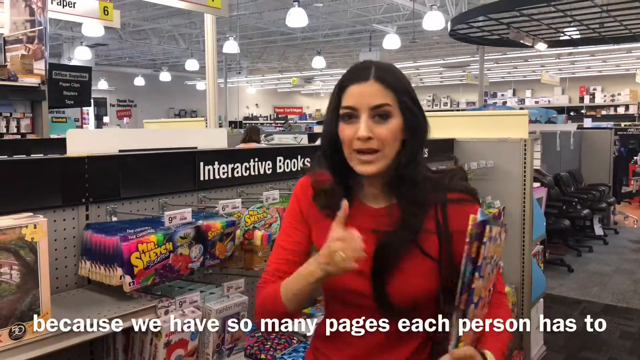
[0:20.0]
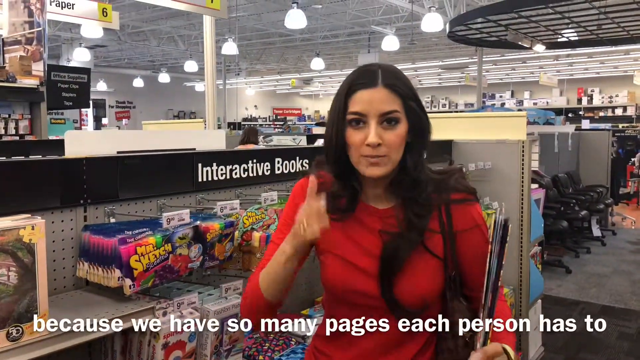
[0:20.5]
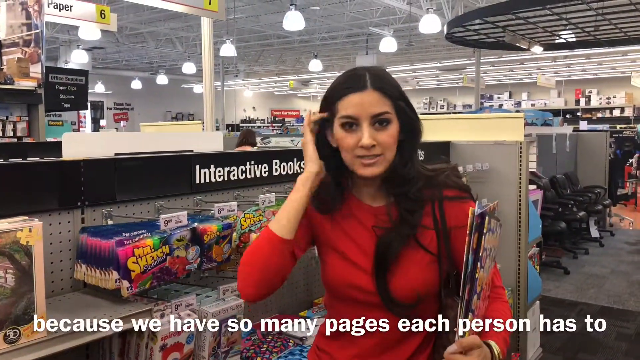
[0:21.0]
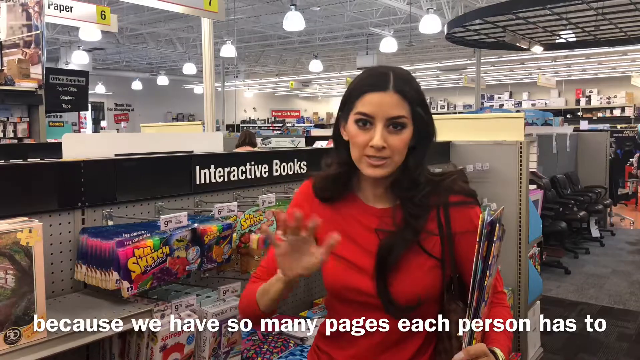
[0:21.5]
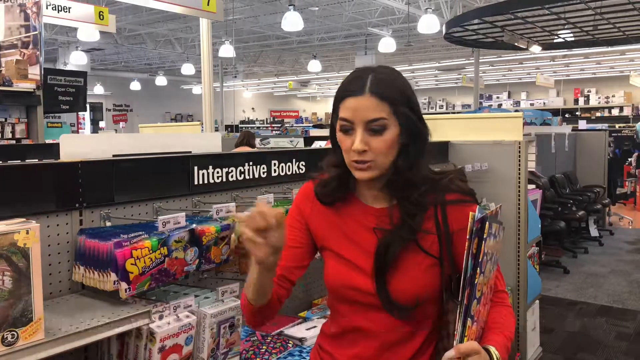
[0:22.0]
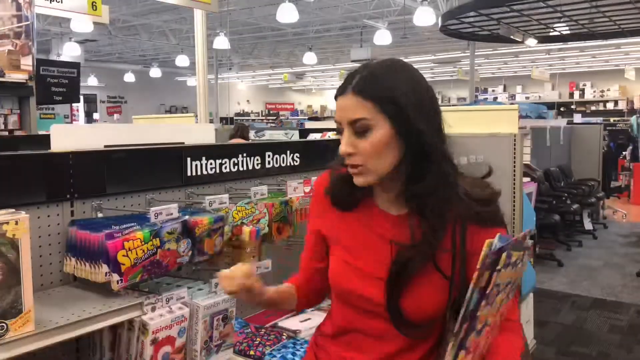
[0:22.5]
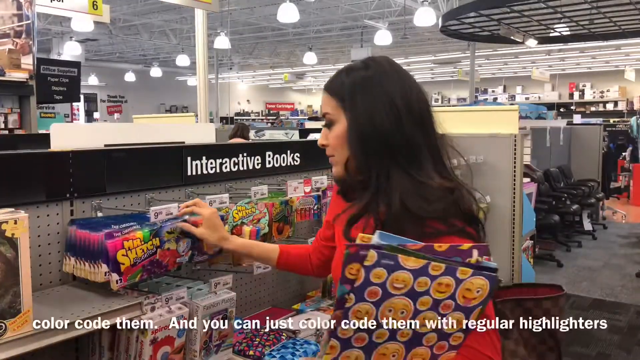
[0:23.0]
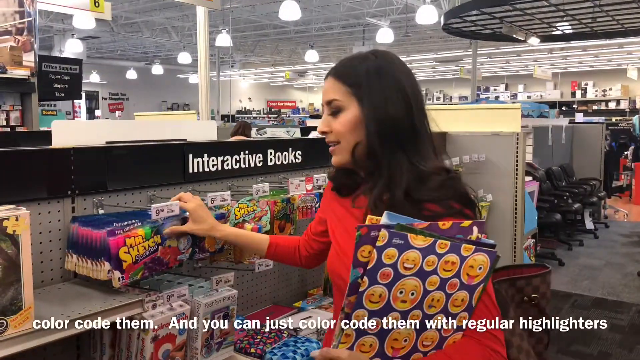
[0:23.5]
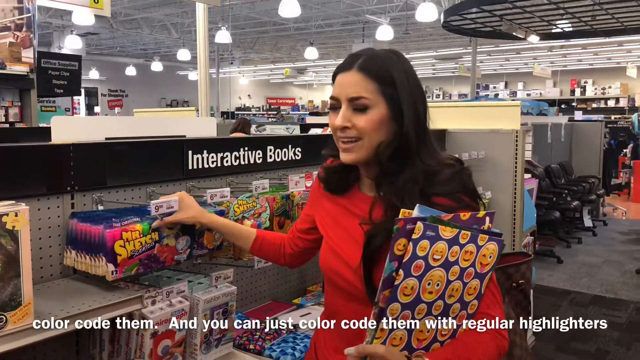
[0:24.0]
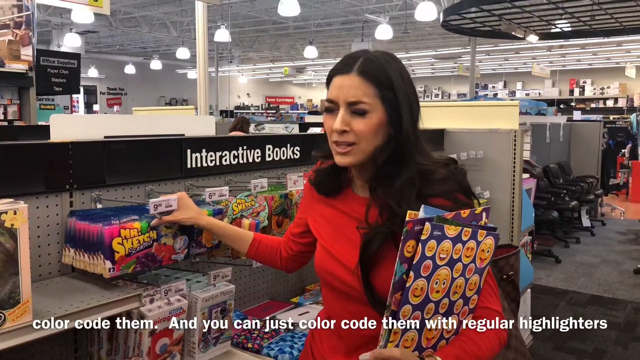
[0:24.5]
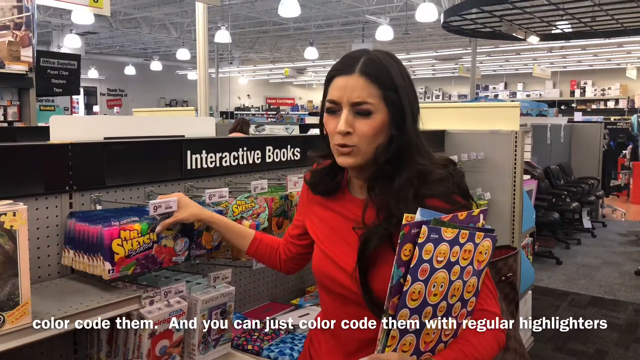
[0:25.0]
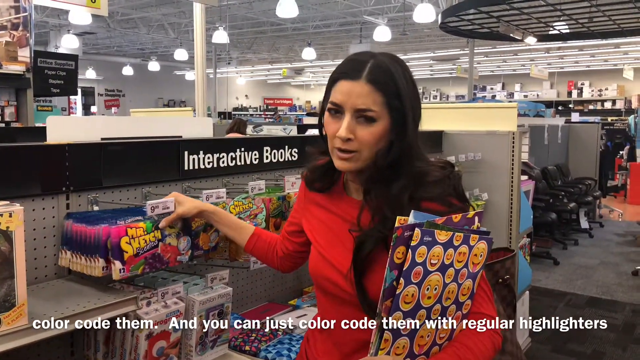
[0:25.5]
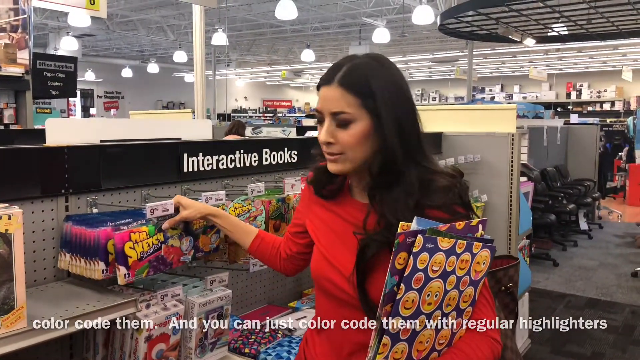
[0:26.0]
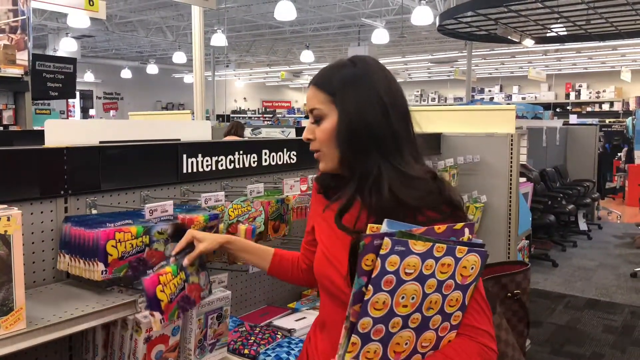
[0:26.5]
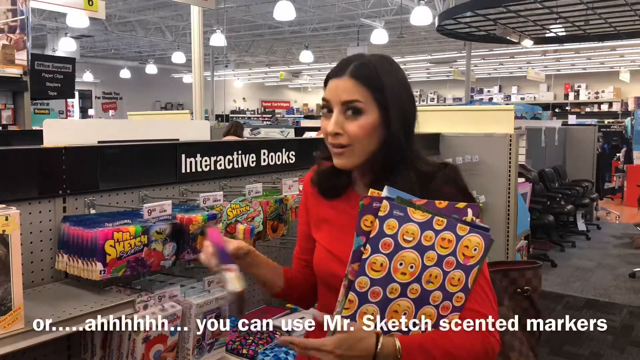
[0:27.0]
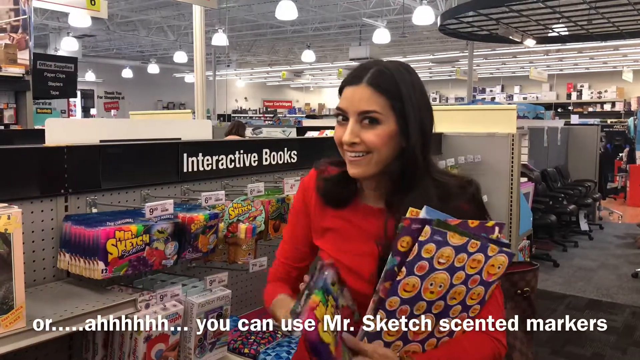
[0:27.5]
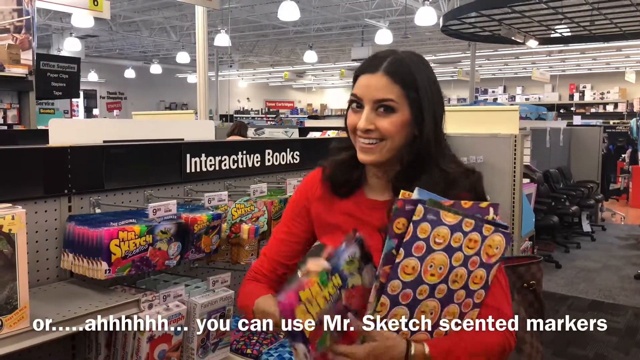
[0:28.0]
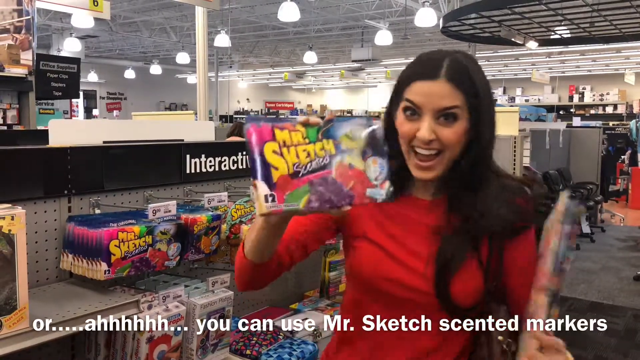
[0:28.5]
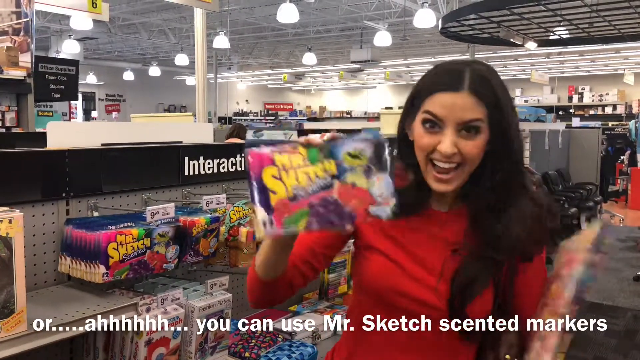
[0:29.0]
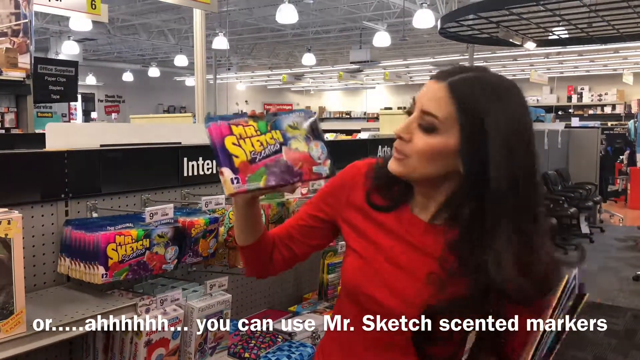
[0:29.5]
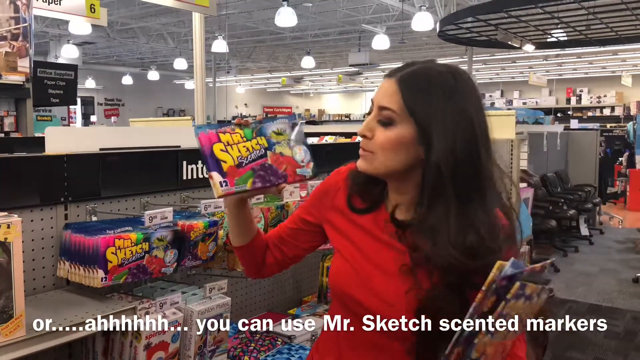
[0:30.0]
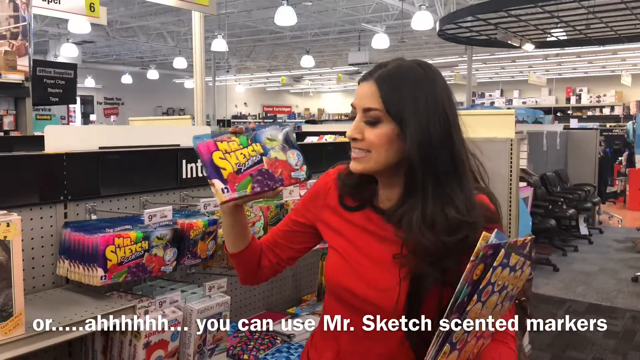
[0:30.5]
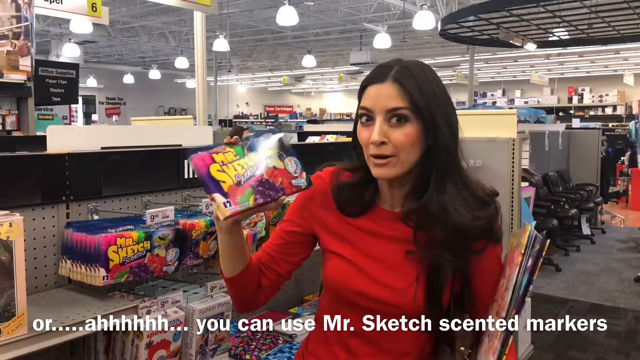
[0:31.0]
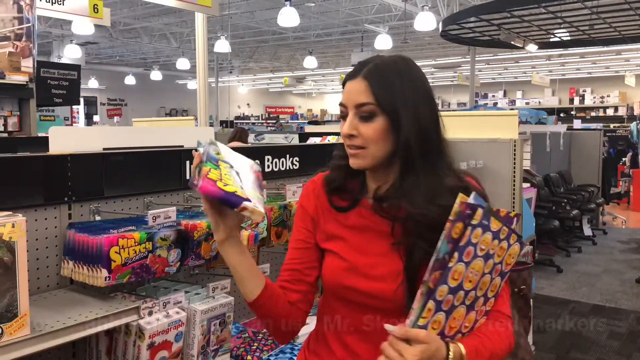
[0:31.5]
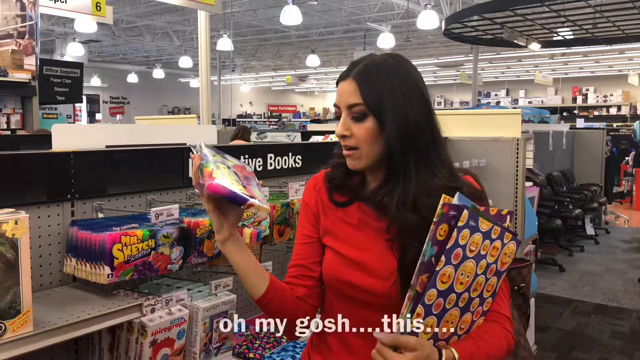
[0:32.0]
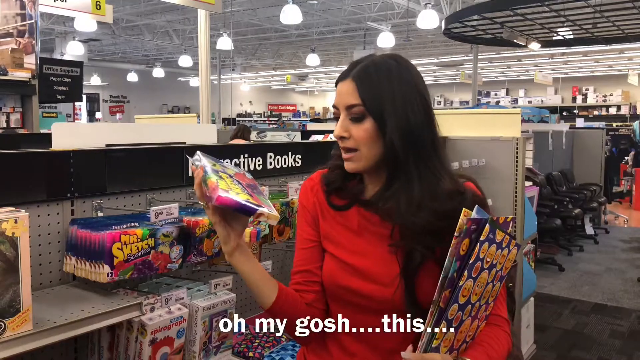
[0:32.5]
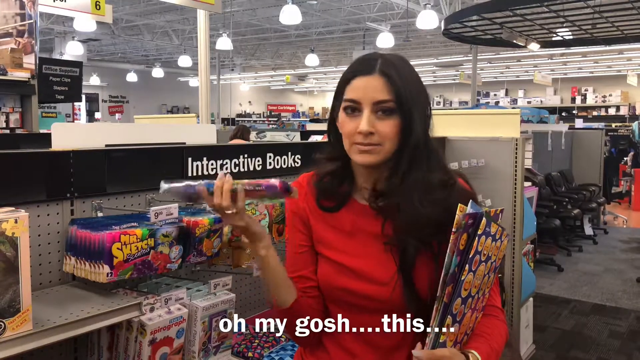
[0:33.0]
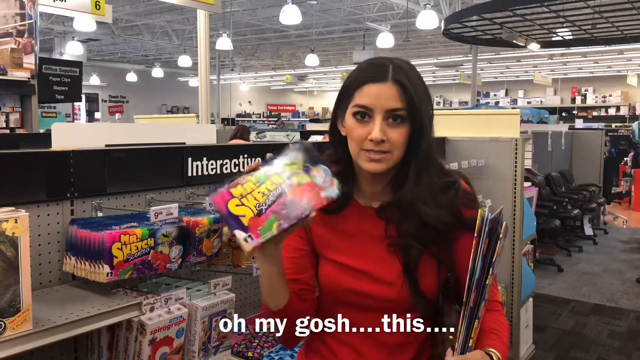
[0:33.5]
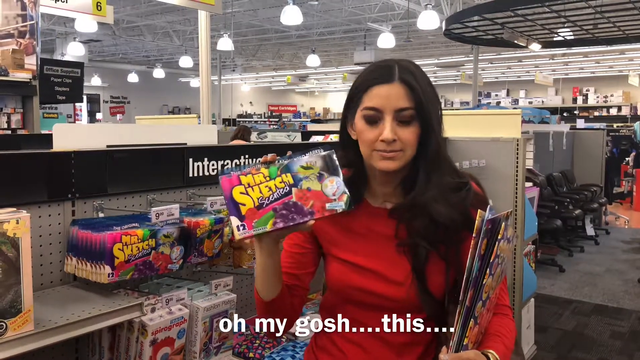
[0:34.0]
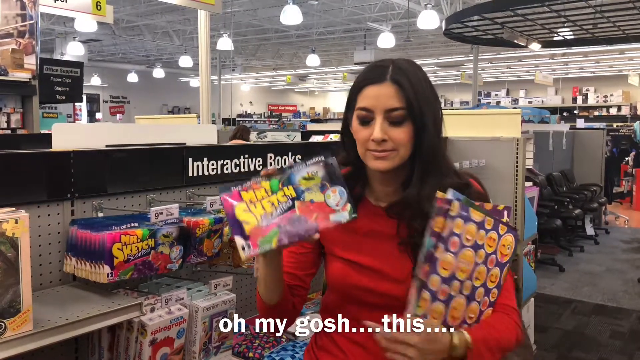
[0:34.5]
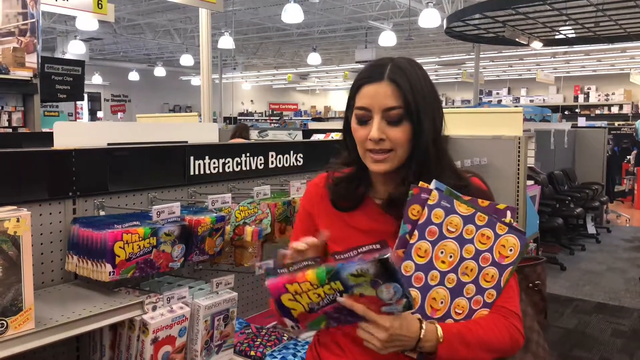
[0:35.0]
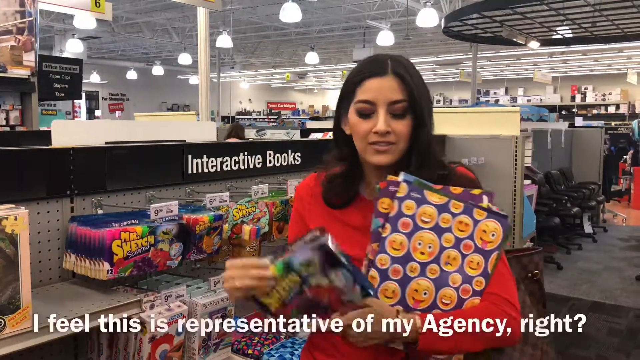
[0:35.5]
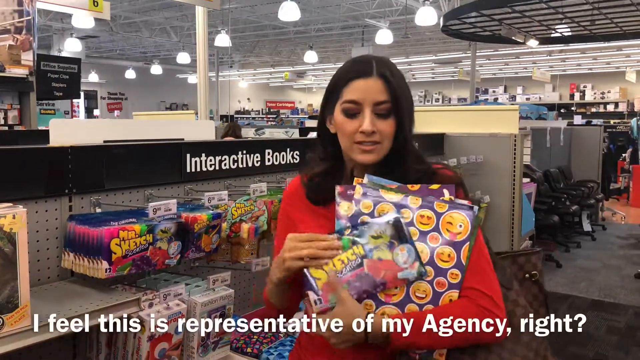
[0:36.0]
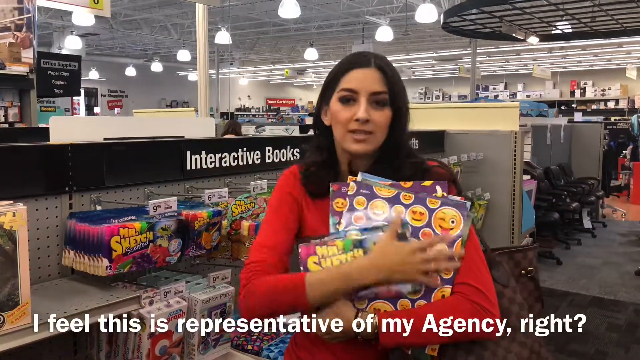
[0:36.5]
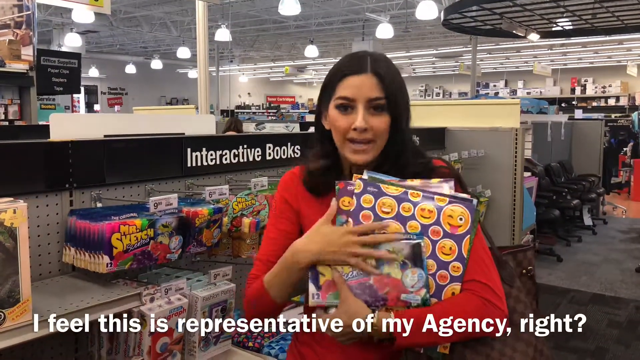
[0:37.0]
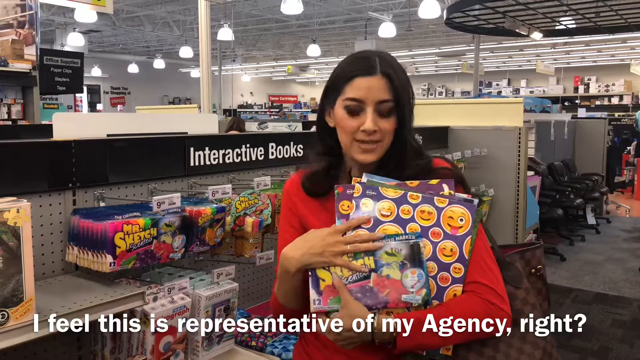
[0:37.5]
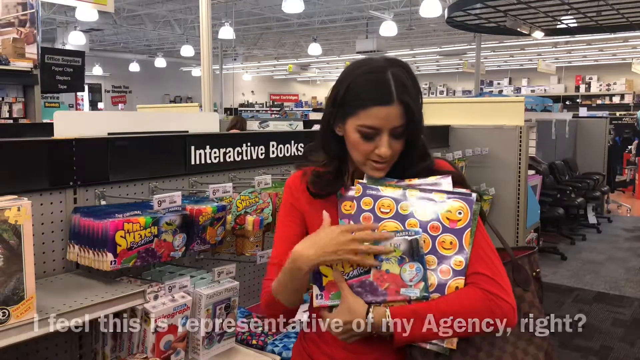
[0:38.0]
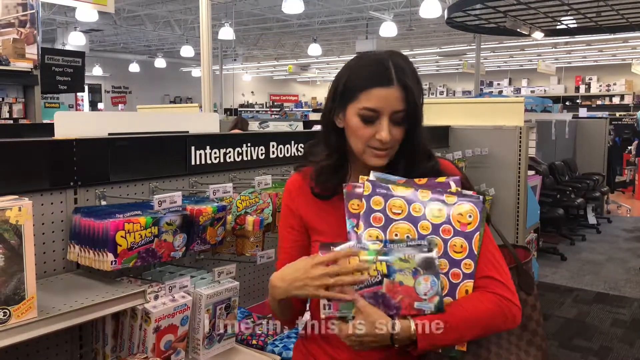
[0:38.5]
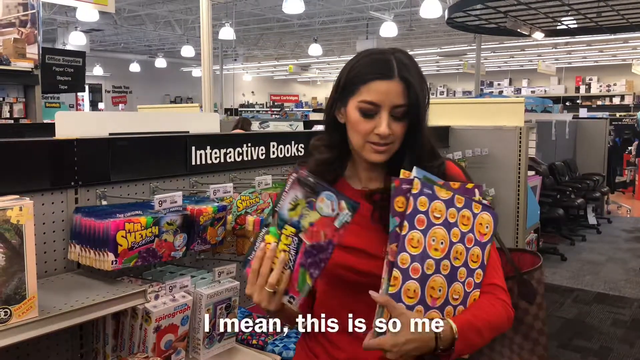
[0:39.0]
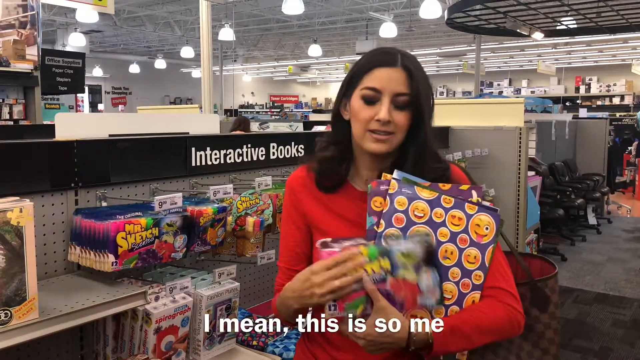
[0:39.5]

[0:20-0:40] The woman stands in front of a display that says "Interactive Books," holding some products and talking. The shot dissolves to another shot of her talking in front of the same display. She holds a product that says "Mr. Sketch," and takes different products off the wall, enthusiastically showing them to the camera as she talks. Subtitles of her words run along the bottom of the screen, partly covered by the play bar; they include "Because we have so many pages, color code them, color code them, highlighters, Mr. Sketch, scented markers, oh my gosh, this representative of my agency, I mean, this is so me."